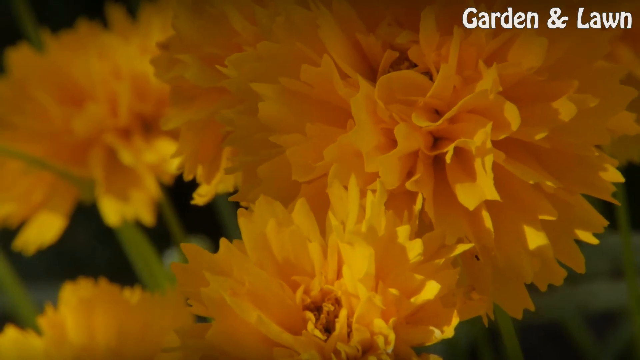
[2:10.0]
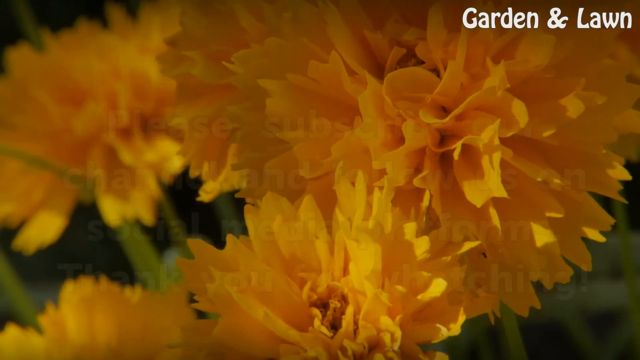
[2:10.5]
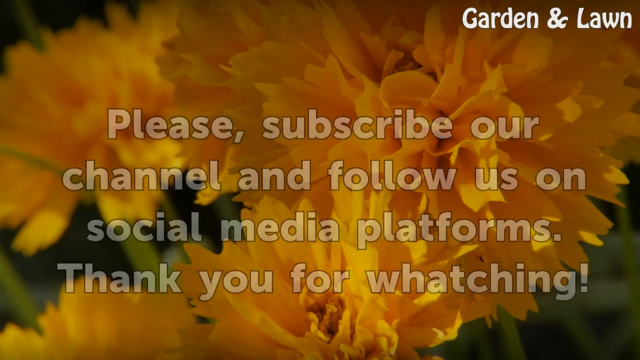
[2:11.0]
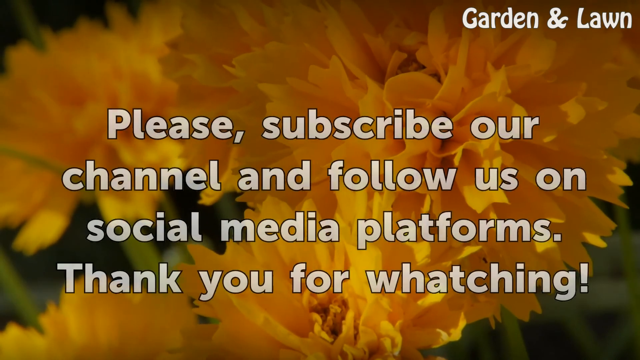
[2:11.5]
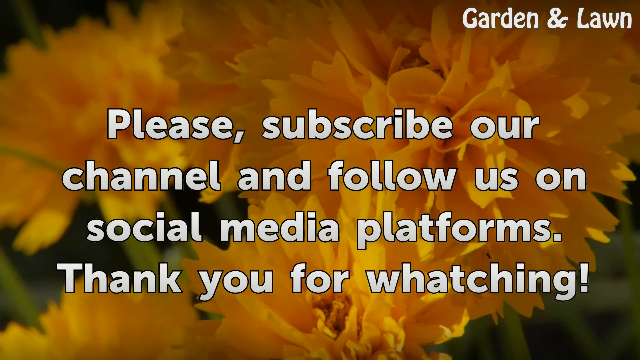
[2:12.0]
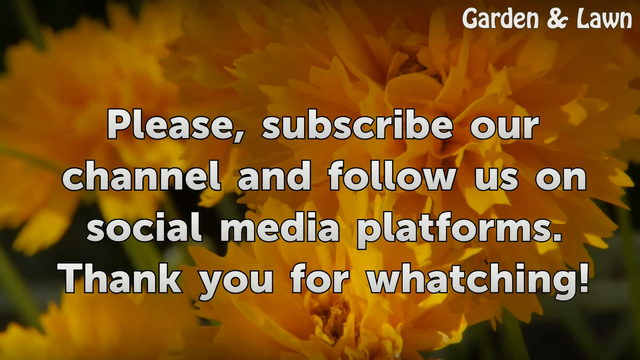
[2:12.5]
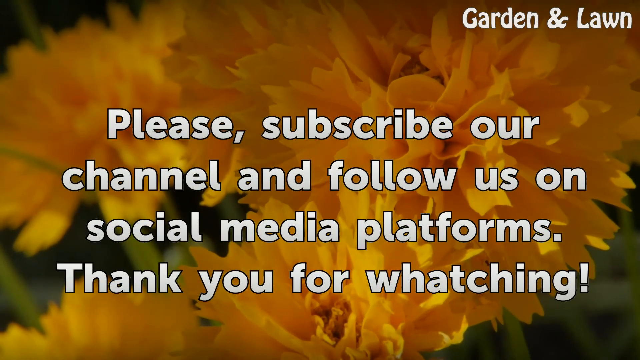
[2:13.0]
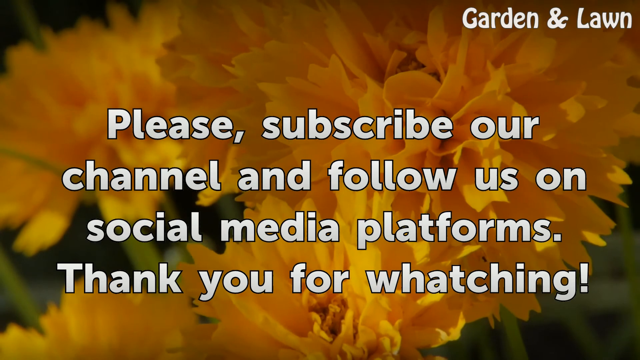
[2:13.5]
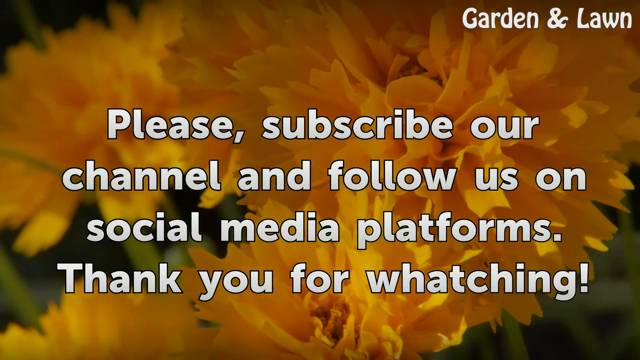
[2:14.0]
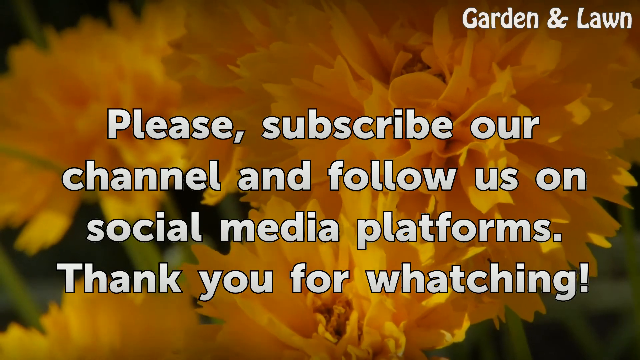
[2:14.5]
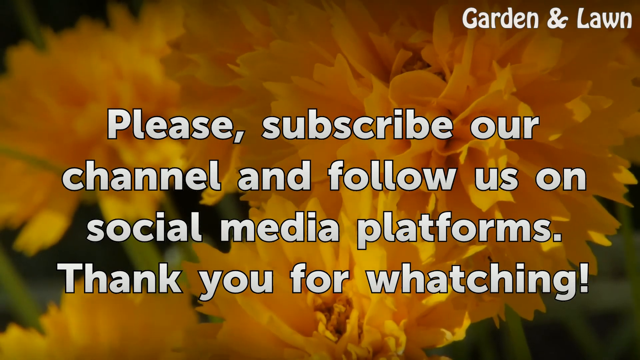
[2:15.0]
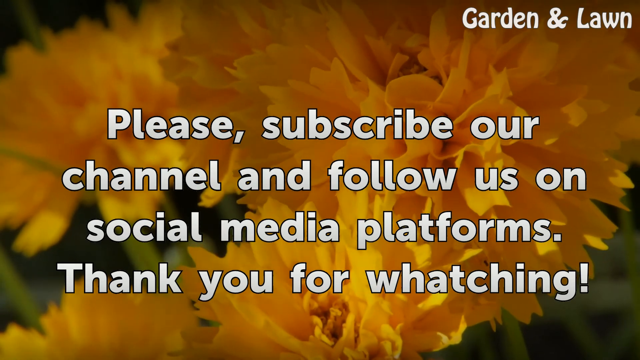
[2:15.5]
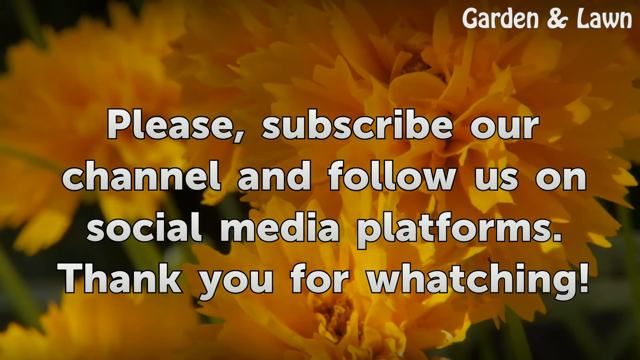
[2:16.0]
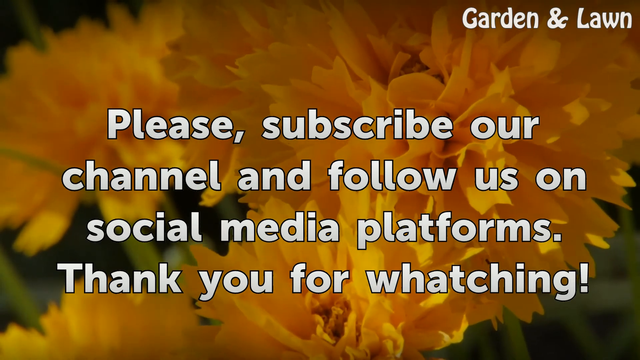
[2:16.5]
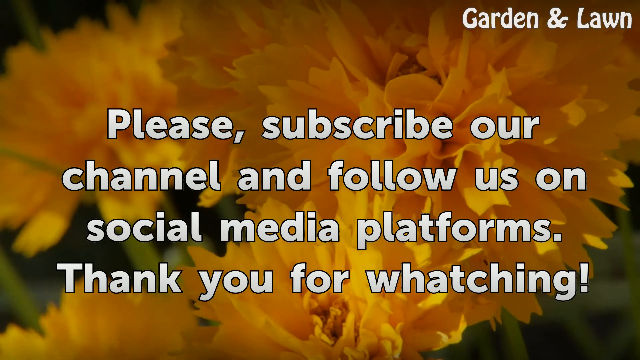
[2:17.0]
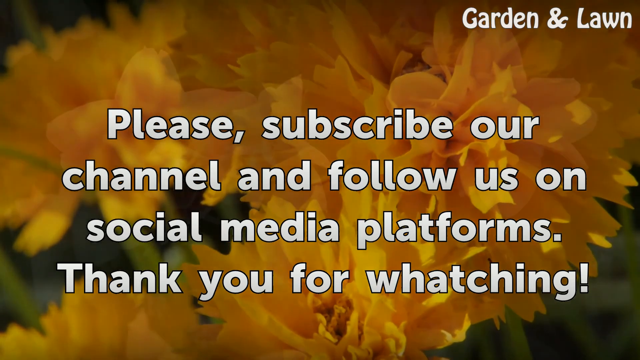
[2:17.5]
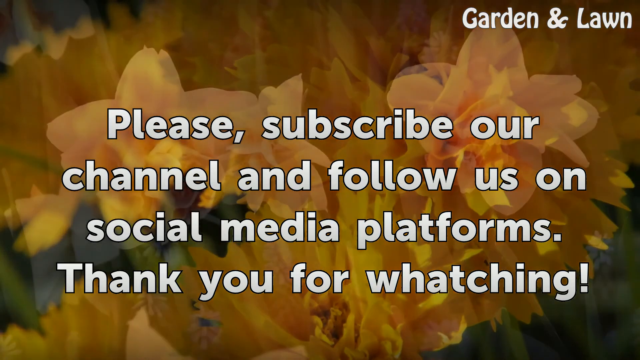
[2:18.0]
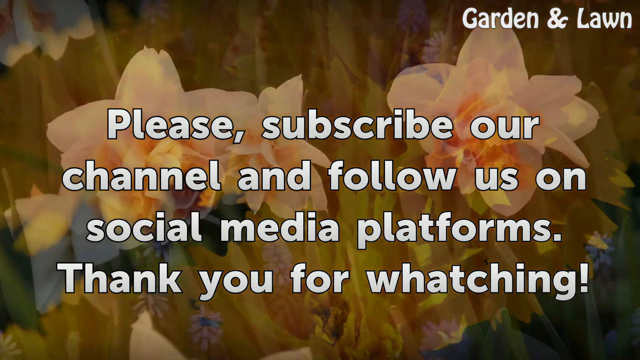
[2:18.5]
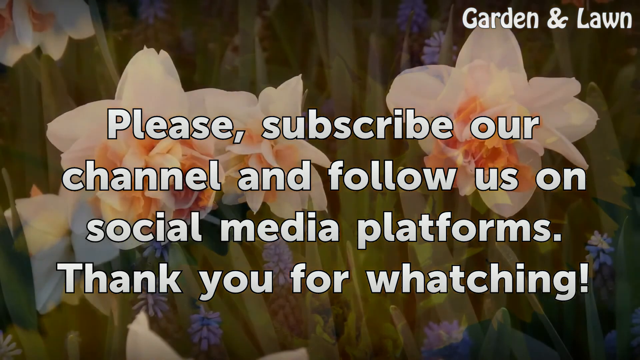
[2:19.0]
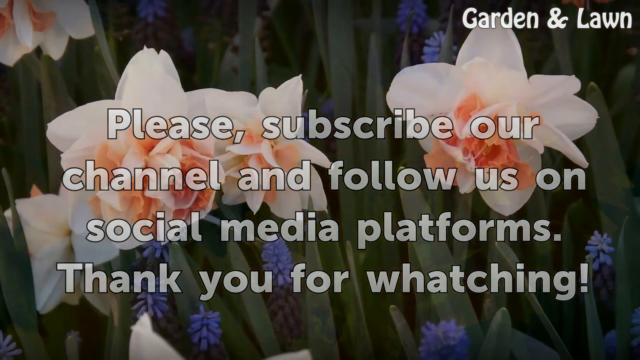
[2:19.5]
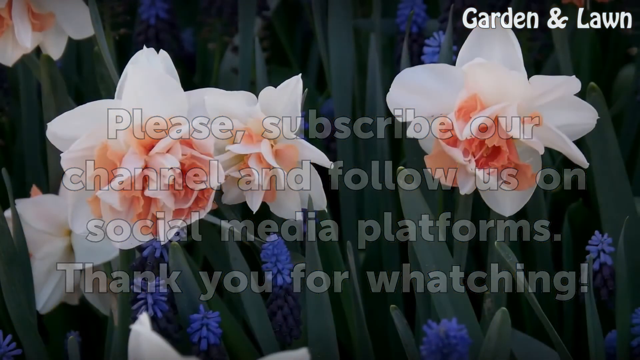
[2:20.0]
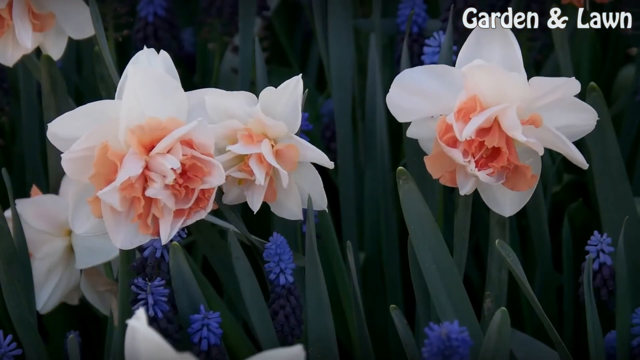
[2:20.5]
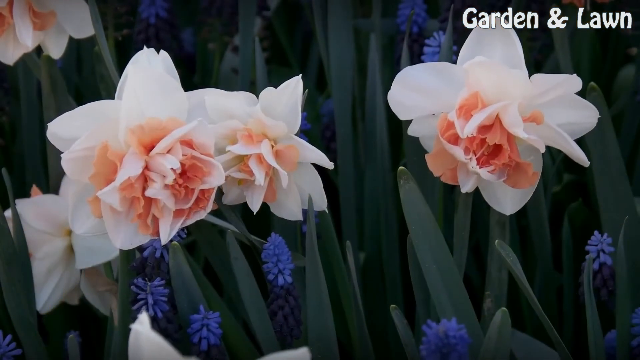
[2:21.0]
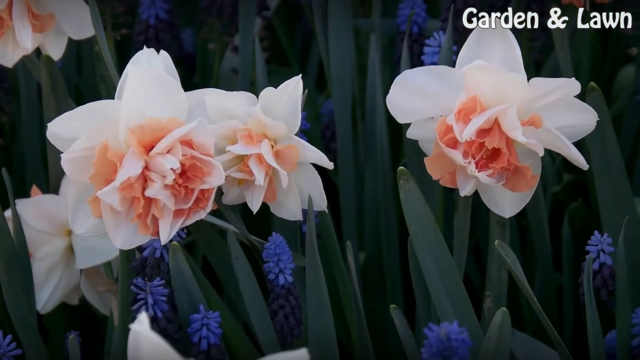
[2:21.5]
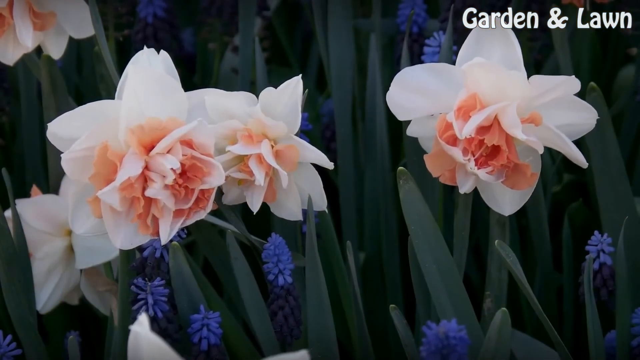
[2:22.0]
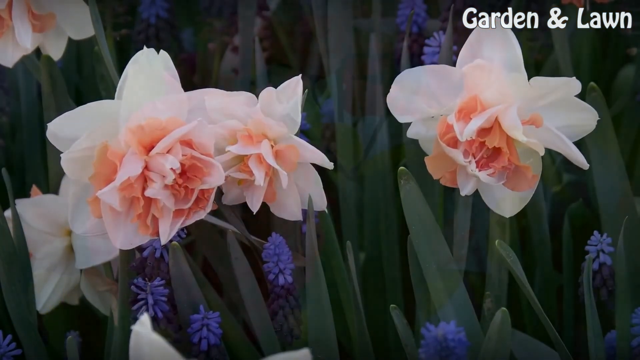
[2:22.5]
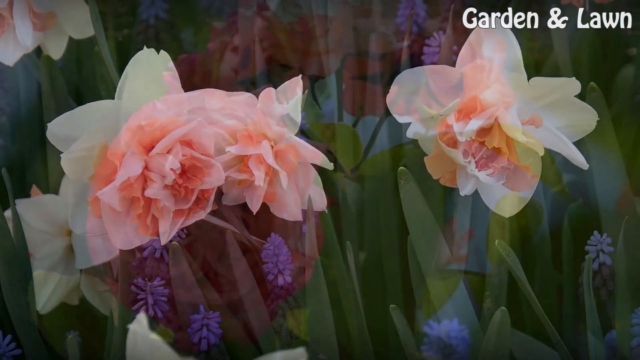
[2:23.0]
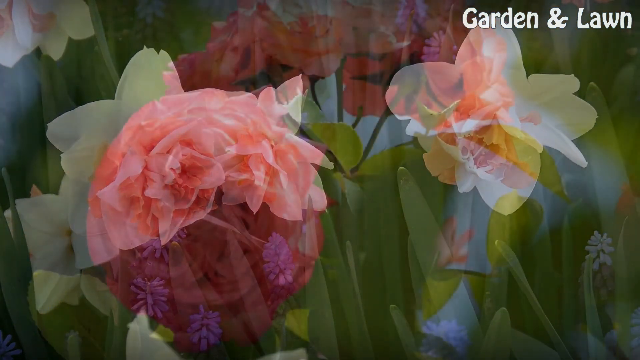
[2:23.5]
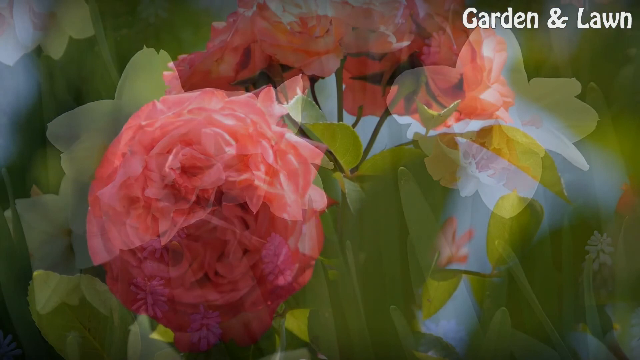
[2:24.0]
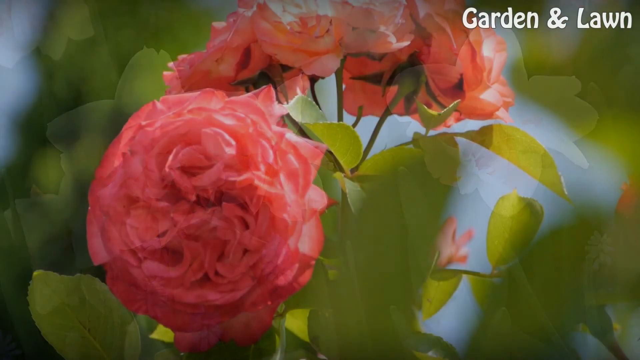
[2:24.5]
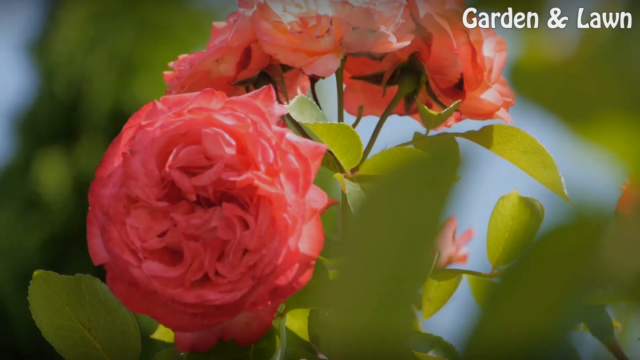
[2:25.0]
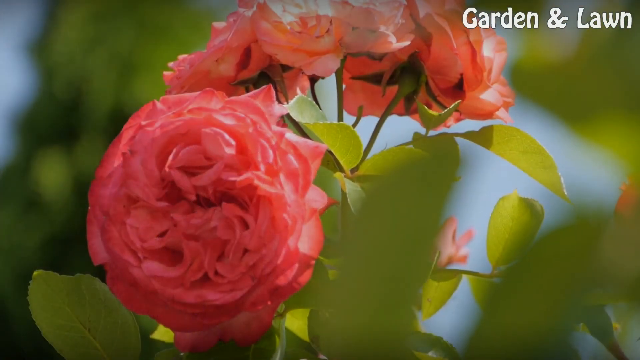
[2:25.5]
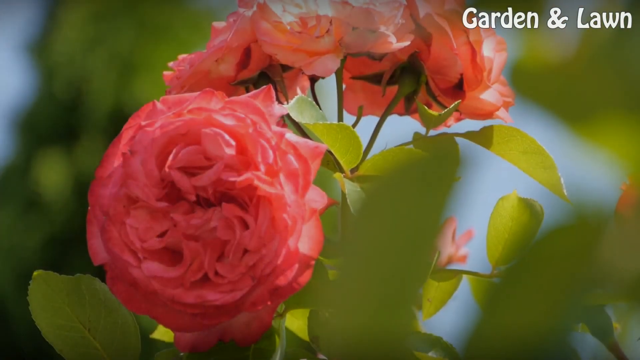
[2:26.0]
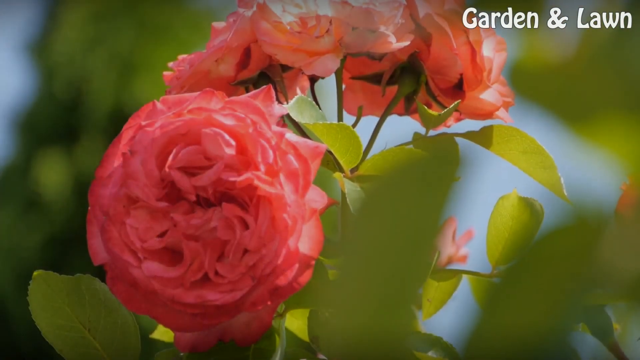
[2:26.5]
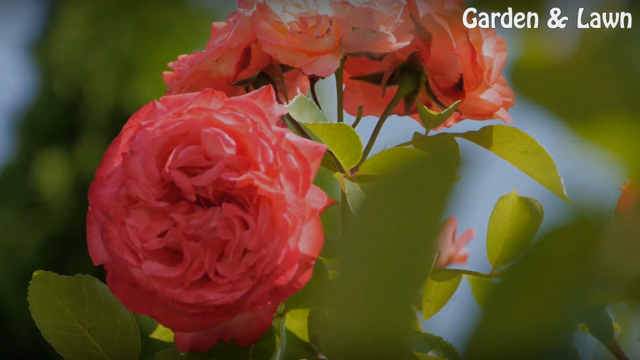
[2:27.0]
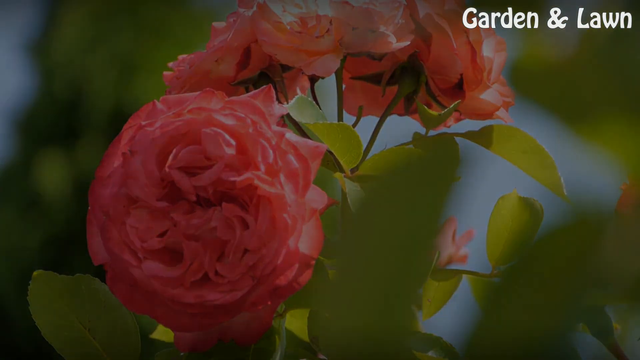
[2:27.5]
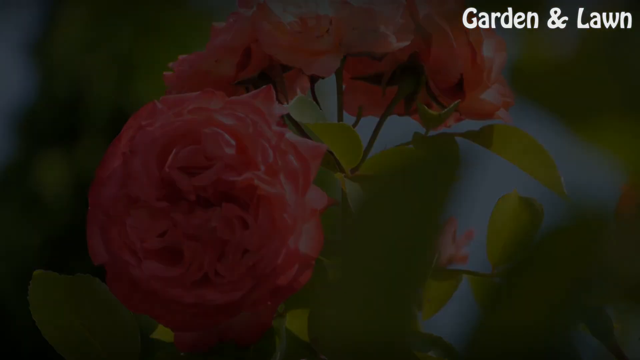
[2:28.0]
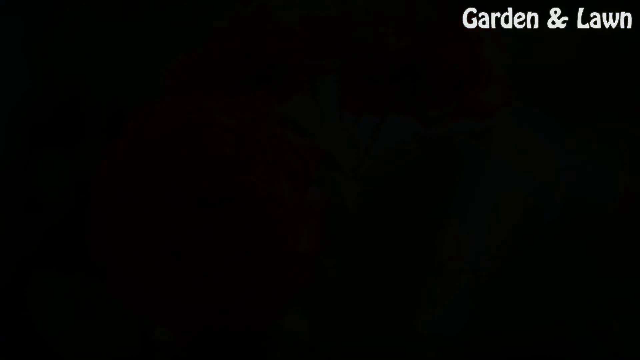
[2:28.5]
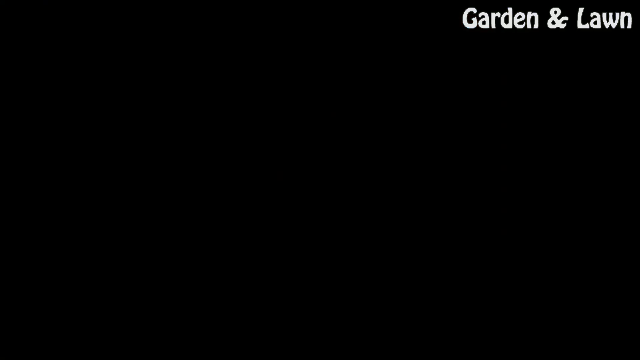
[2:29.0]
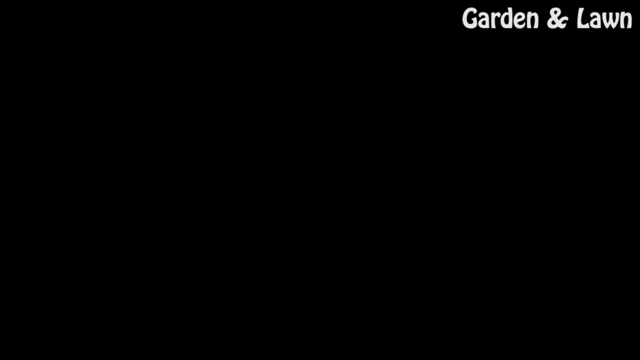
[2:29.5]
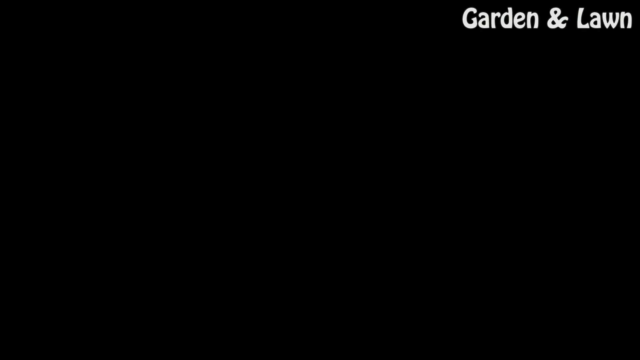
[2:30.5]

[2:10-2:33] A close-up shows yellow chrysanthemums with spiky, closely grouped petals. A caption comes on screen in white letters: "please subscribe our channel and follow us on social media platforms. Thank you for watching." The chrysanthemums gently blow in the breeze, with green foliage around the outside. The image then changes to a close-up of daffodils behind the subscription message. The message fades, revealing the daffodils in detail: they have white outer petals and pale, peachy, salmon pink inner petals. Grouped at the bottom of the daffodils are some purple single-stemmed flowers. The image then changes to red roses with closely grouped petals, their leaves gently moving in the background. The screen goes dark.